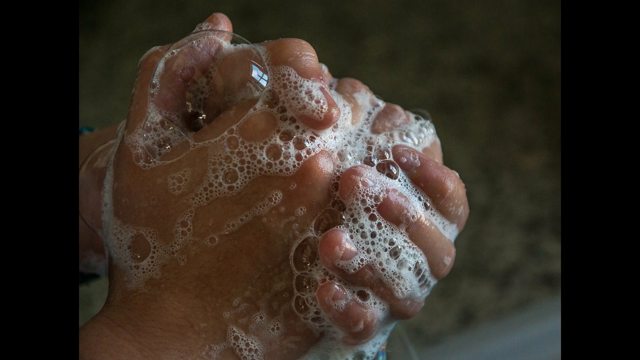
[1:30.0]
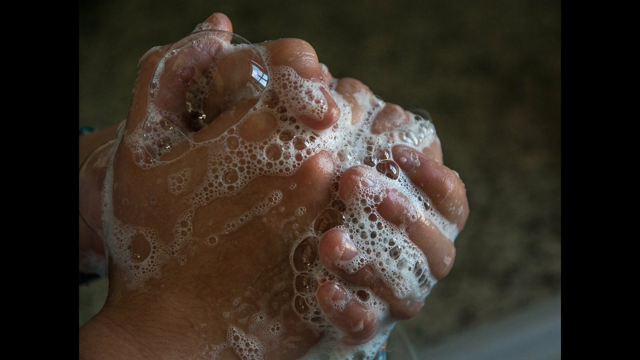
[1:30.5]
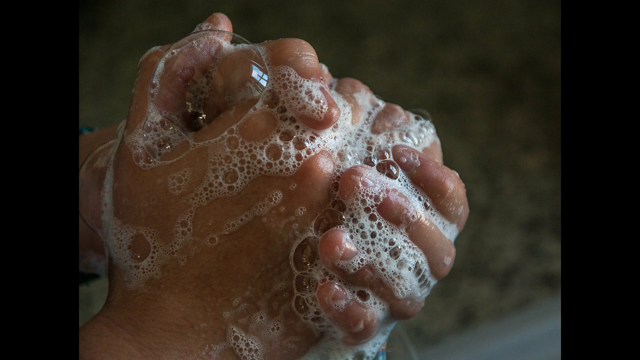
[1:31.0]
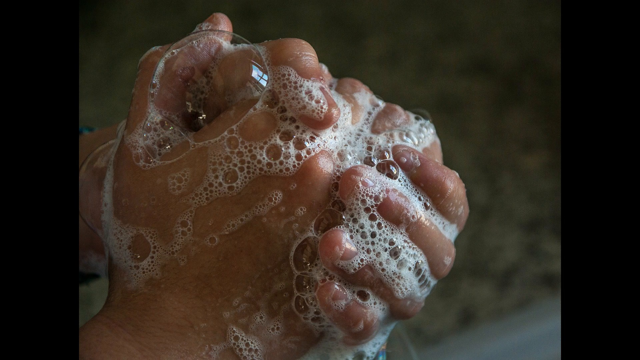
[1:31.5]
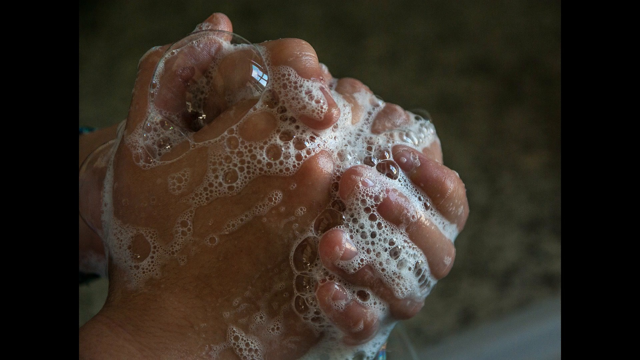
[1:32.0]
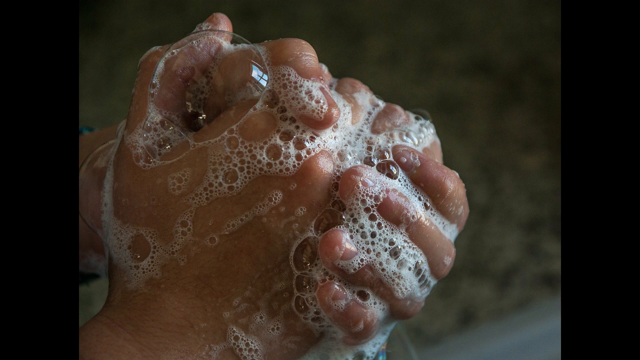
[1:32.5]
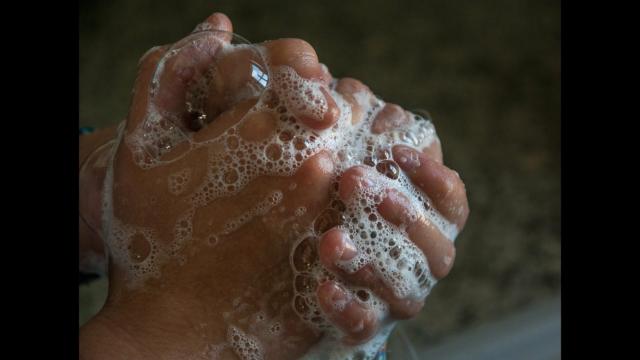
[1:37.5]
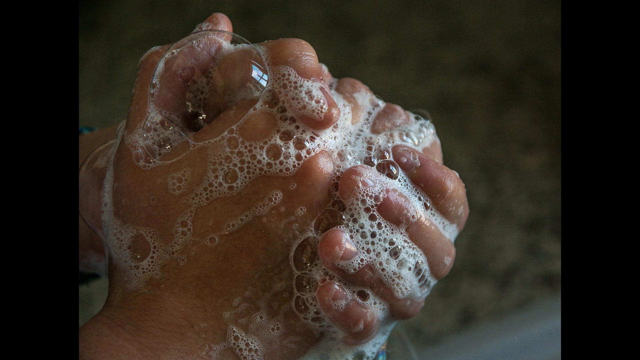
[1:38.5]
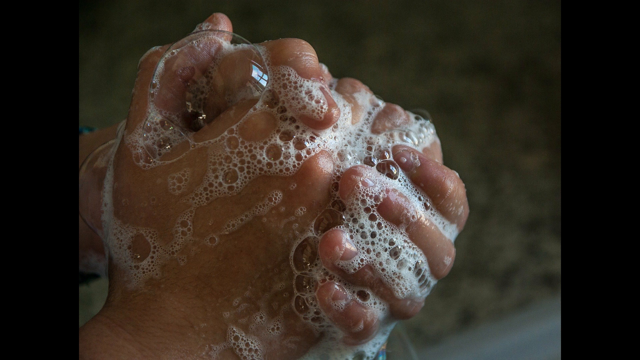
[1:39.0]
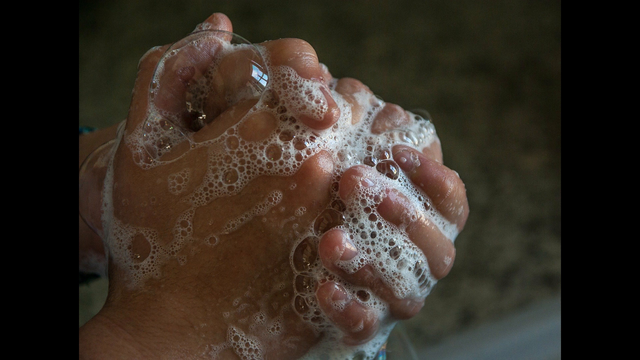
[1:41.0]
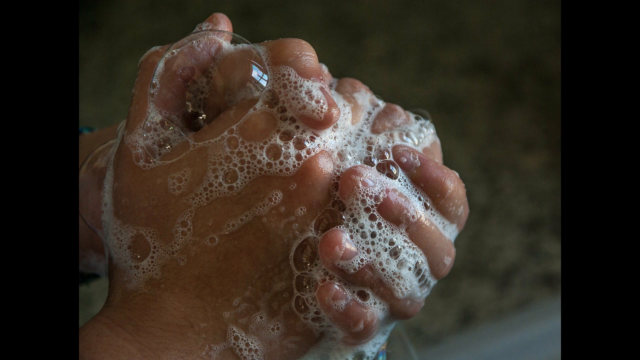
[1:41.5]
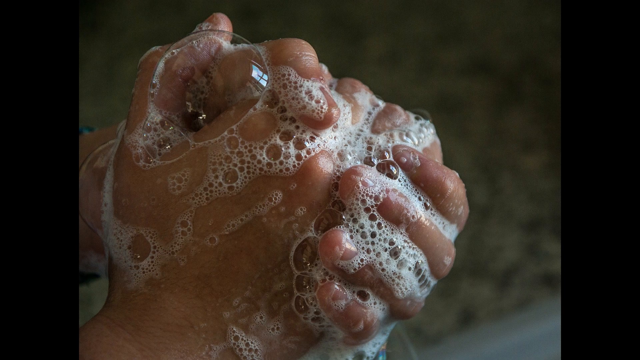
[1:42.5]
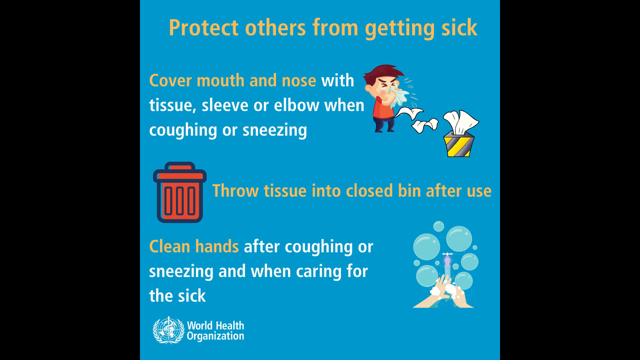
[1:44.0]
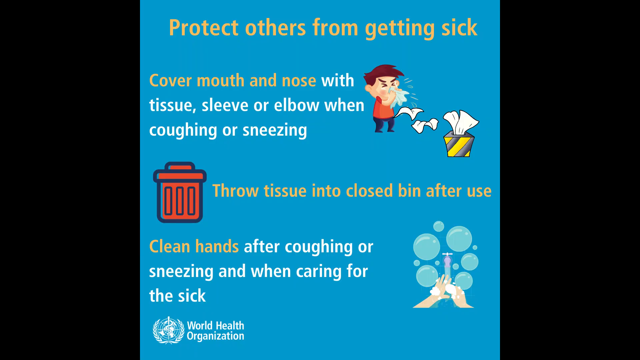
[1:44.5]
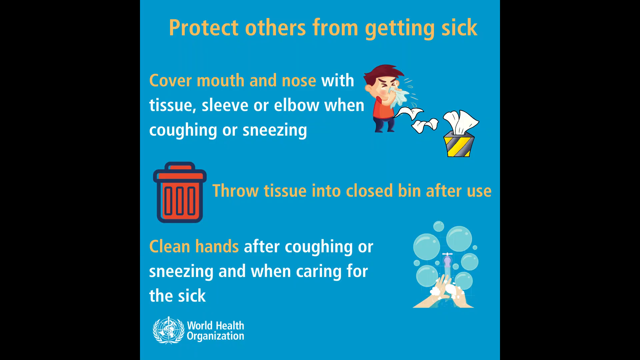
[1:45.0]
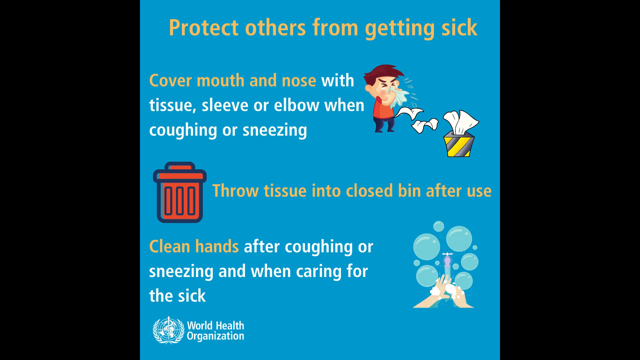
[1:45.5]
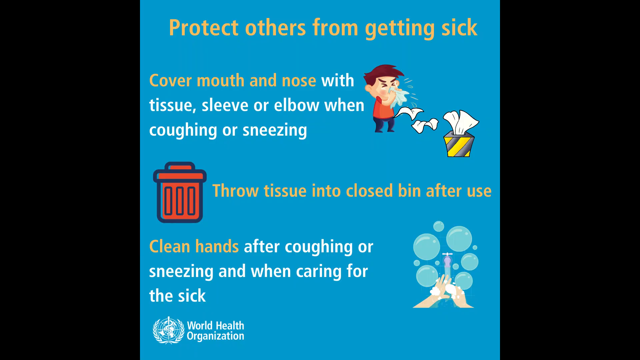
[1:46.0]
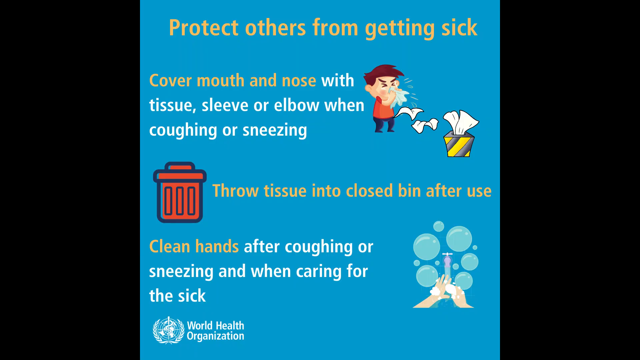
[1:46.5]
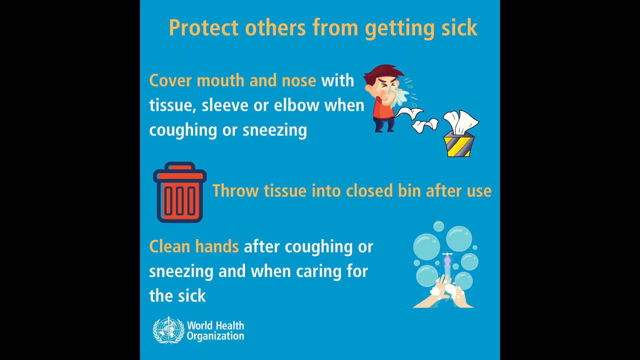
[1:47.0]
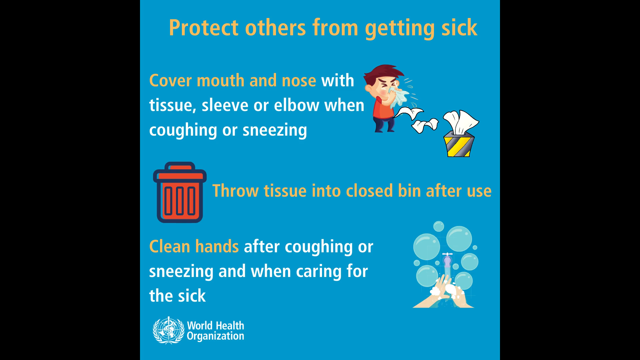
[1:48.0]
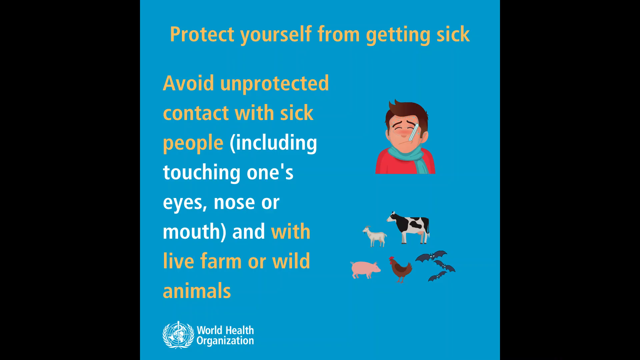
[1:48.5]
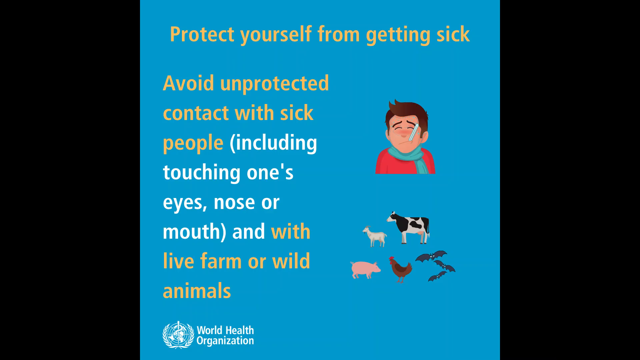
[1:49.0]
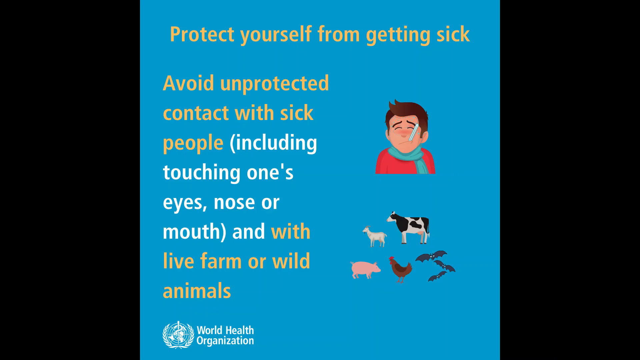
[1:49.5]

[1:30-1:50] Someone is washing their hands, with soap all over them. A big bubble forms as they rub soap and water over their hands held together, and the soap covers part of their wrists. The person seems to have fairly short fingernails, but the gender is unclear. Then a different slide appears with the text "protect others from getting sick." It says "cover your mouth and nose with tissue, sleeves, or elbow when coughing and sneezing," with a cartoon of a man sneezing into a tissue. It says "throw away tissue into bins after use," with a bin next to that. It then says "cleans hand after cough or sneezing," with the bubbles and hand-washing image as before. Then another slide appears about staying away from any type of wild animals or livestock while sick.